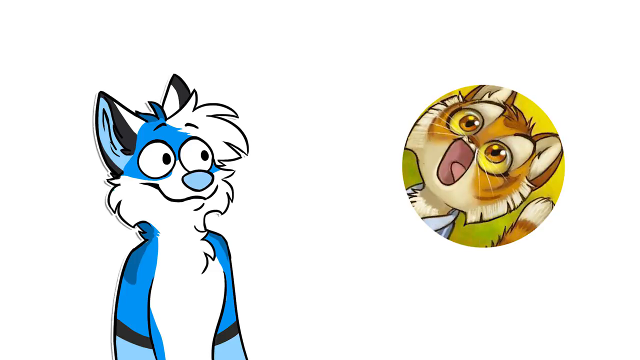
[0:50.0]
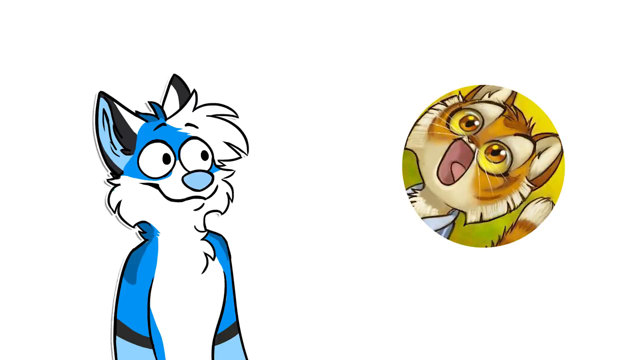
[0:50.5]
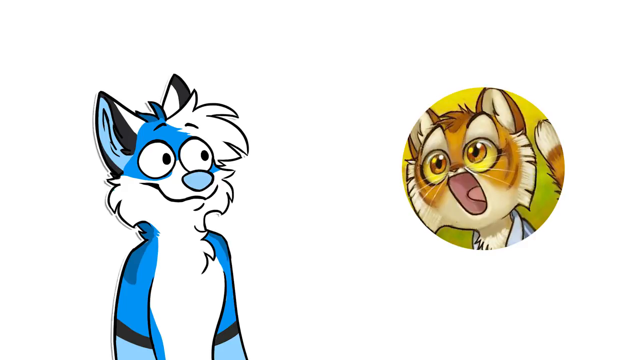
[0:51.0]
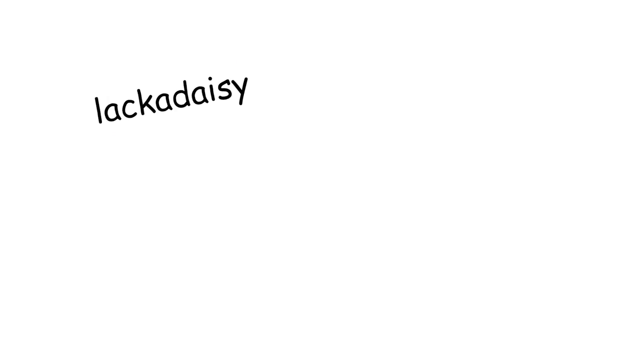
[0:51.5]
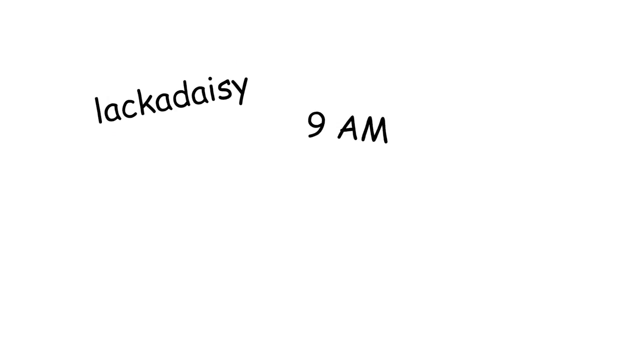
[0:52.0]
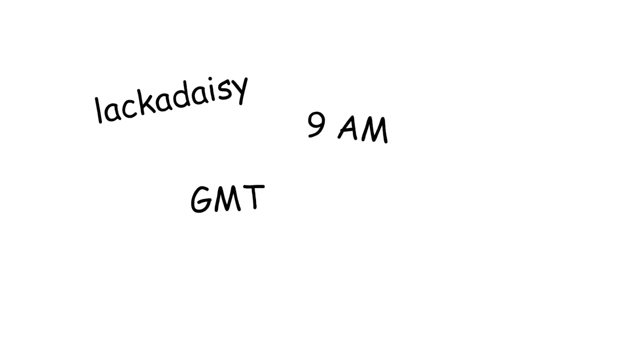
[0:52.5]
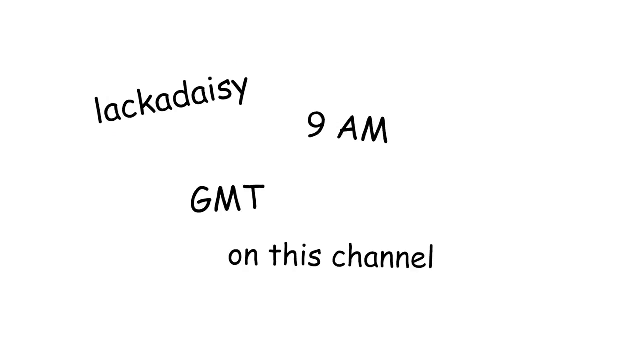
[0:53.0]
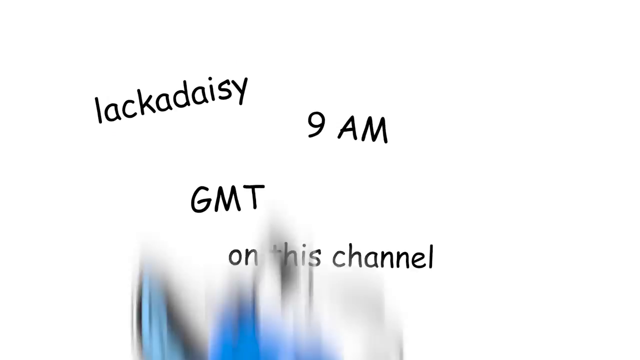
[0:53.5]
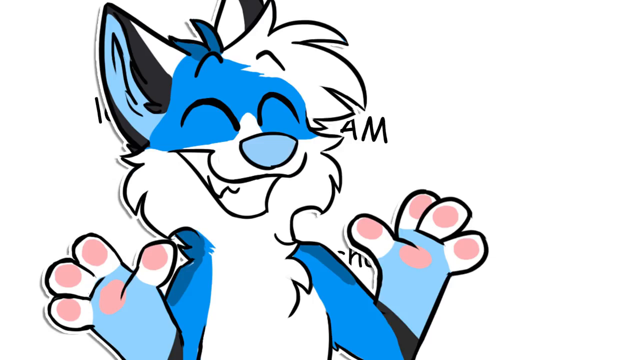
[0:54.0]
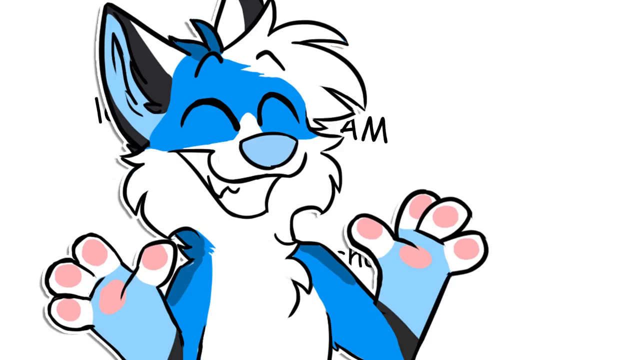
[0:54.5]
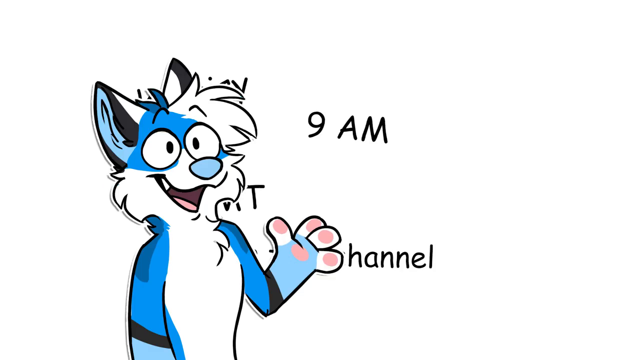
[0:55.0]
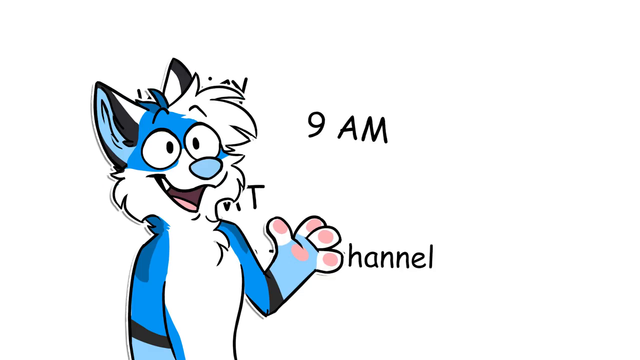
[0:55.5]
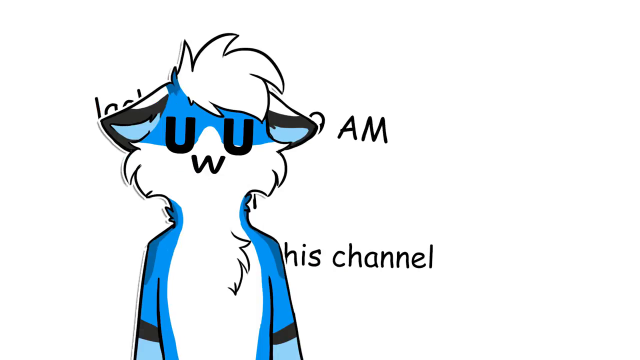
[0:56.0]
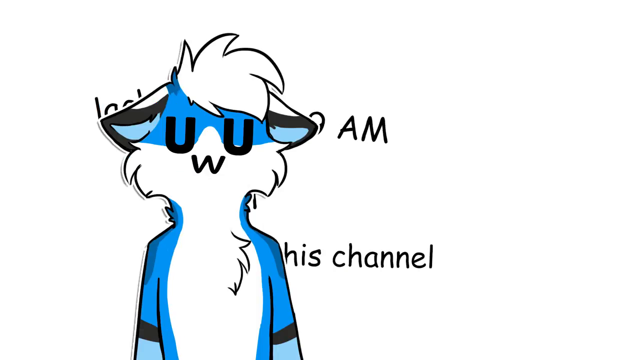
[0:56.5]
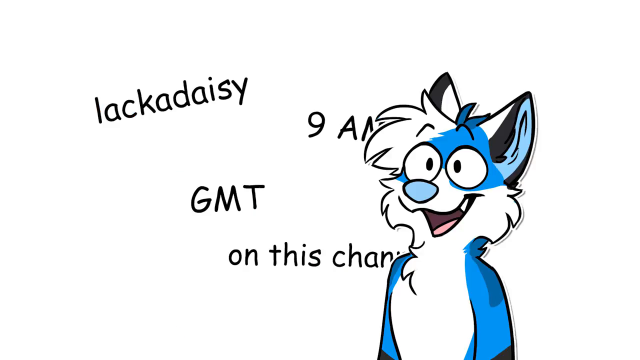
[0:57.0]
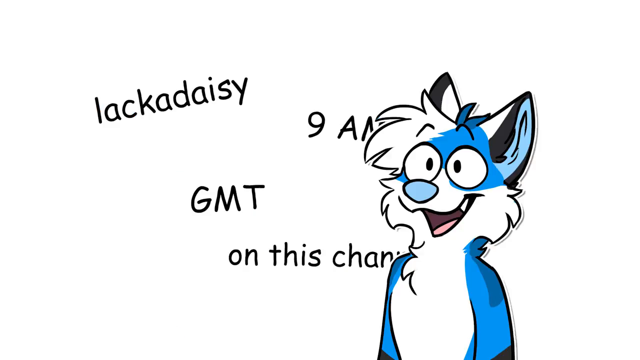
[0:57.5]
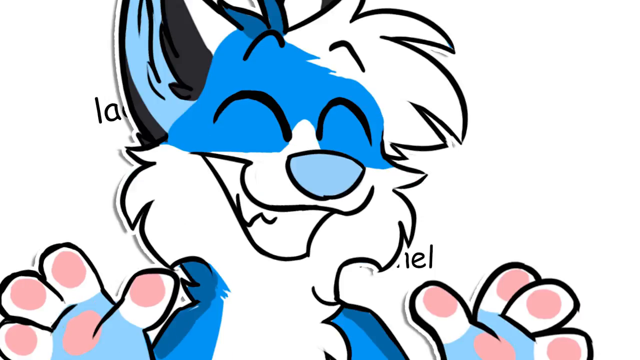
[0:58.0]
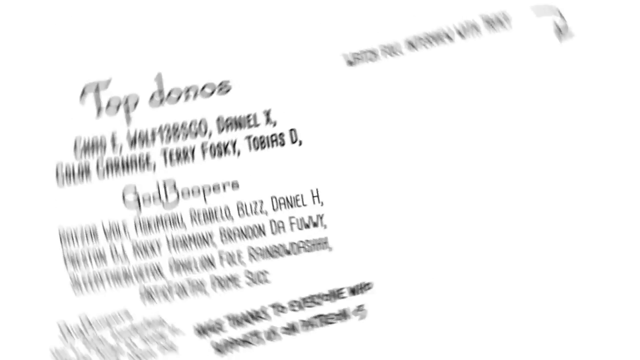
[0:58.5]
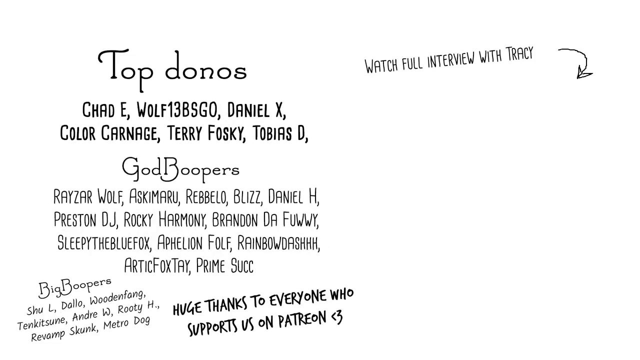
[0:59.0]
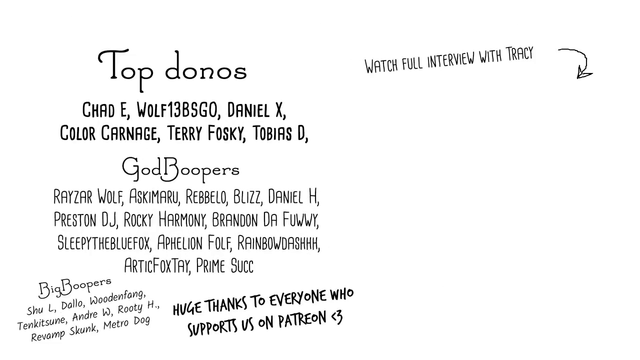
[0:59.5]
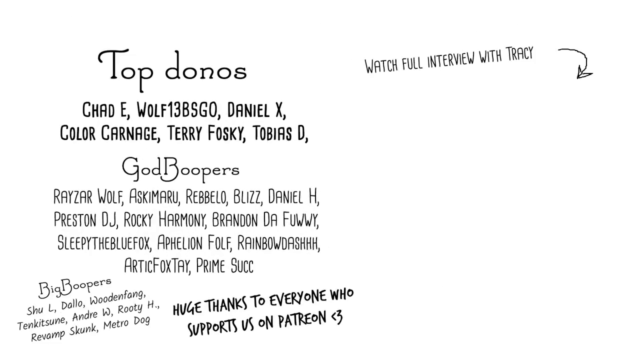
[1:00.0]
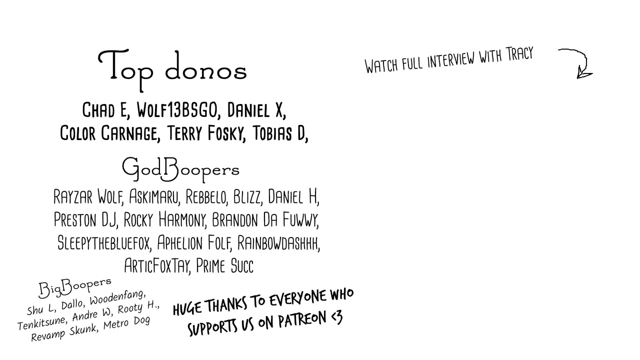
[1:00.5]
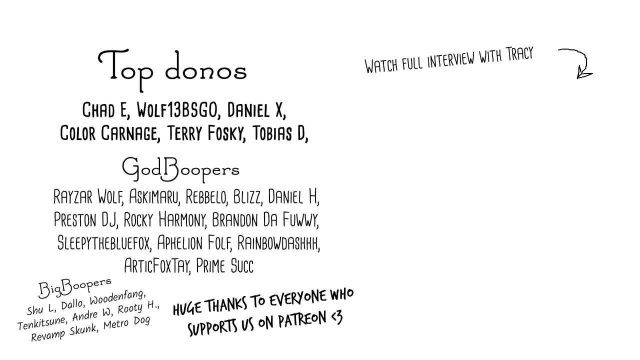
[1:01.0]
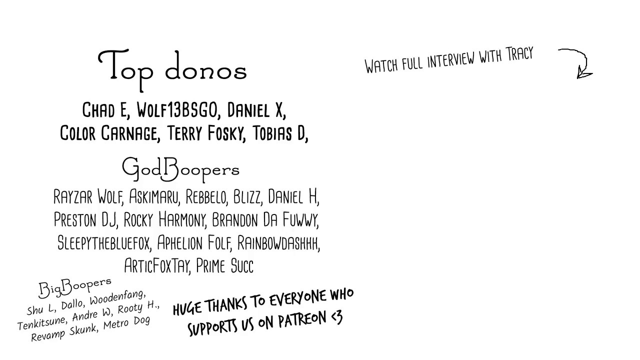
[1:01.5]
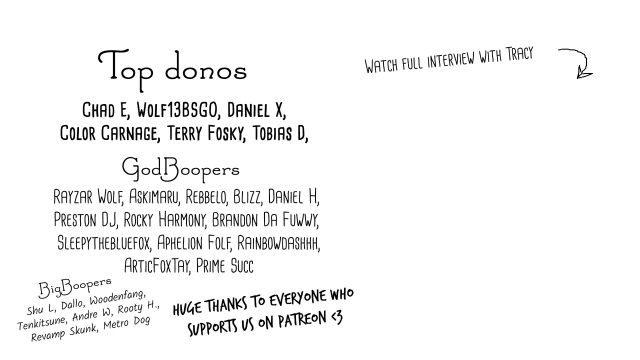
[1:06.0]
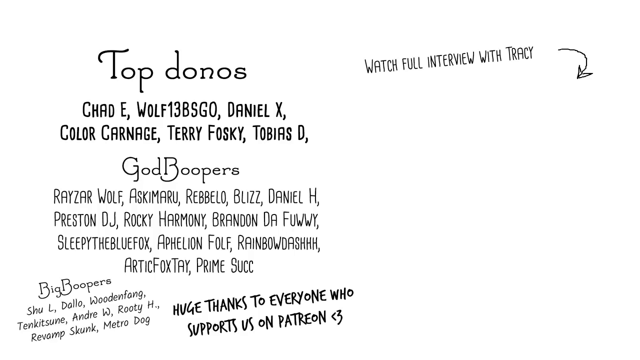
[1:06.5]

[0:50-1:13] The hand-drawn blue cat is shown: its outer fur is blue, its chest fur is all white, the fur around its face is white, and the fur around its eyes is bluish. The cat is looking at an icon of another cat, which kind of resembles a tiger with its mouth open, inside a circle in the middle of the air. Text reads "Lackadaisy, 9am GMT," then "9am" appears with the cat covering it a little, followed by "Lackadaisy." The video then moves to another segment reading "Top Don't Nose" with some information. On the right side it says "watch full interview with Tracy," with an arrow pointing somewhat downwards. There is "God bloopers," a list of many names, and "Big Bloopers" at the bottom. A thank-you message reads "huge thanks to everyone who supports us on Patreon." All of this is written or typed on a white backdrop that seems to resemble a card.